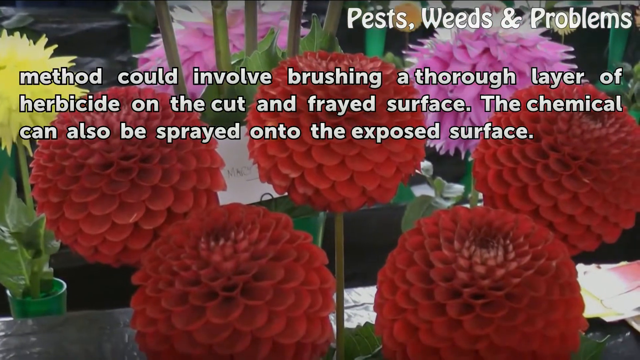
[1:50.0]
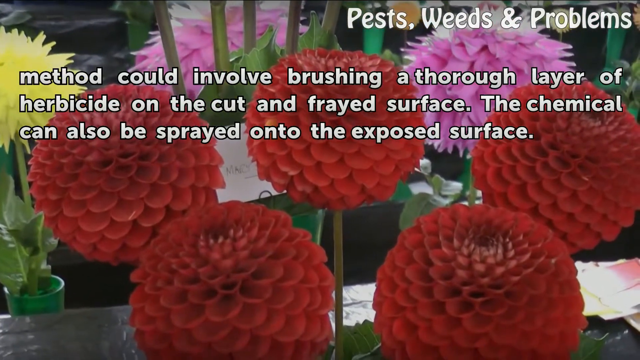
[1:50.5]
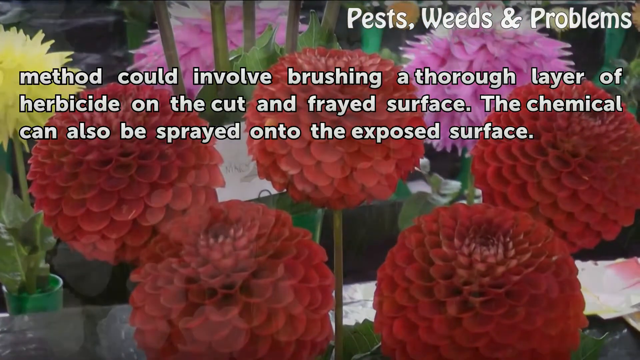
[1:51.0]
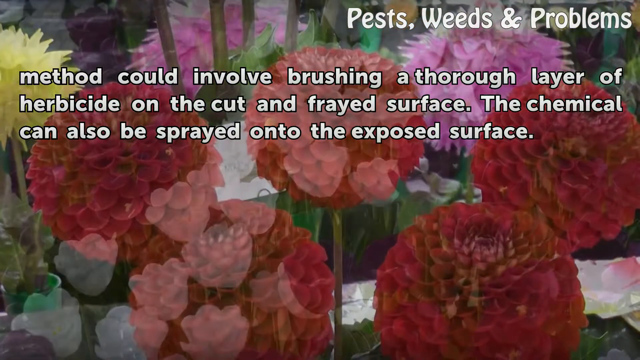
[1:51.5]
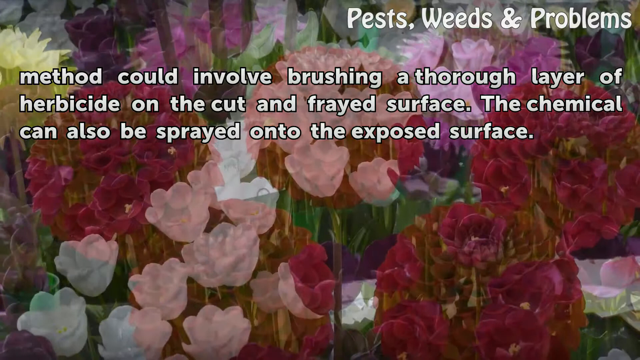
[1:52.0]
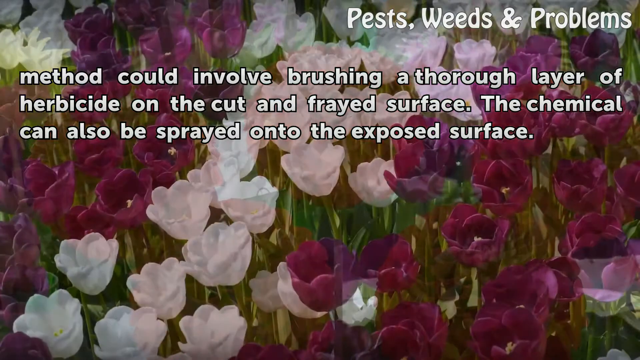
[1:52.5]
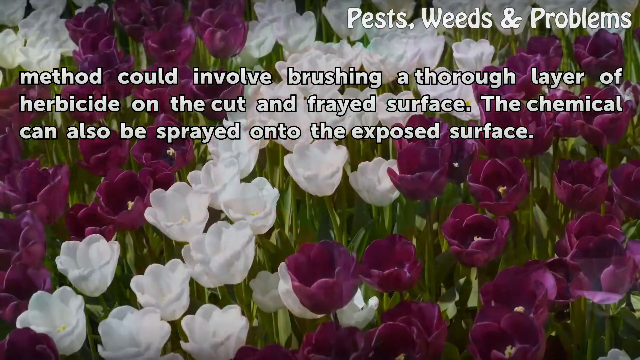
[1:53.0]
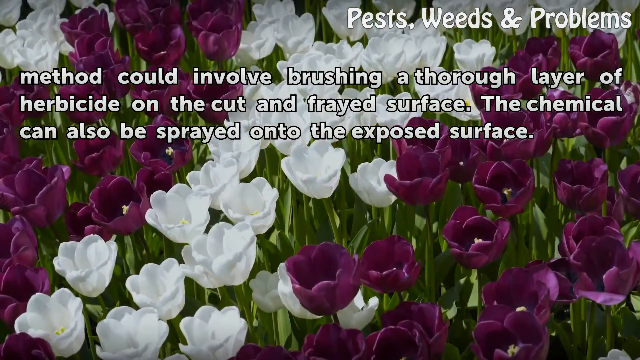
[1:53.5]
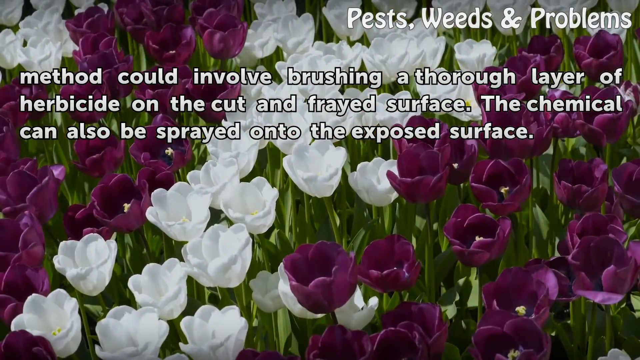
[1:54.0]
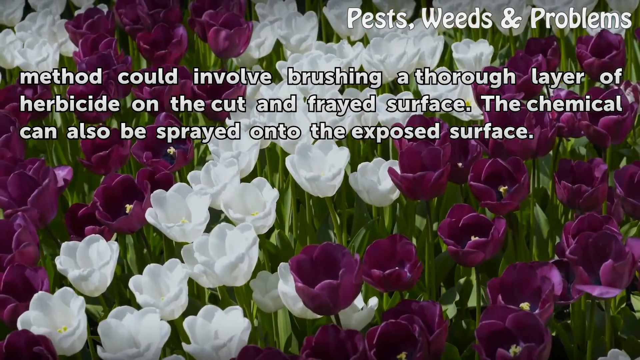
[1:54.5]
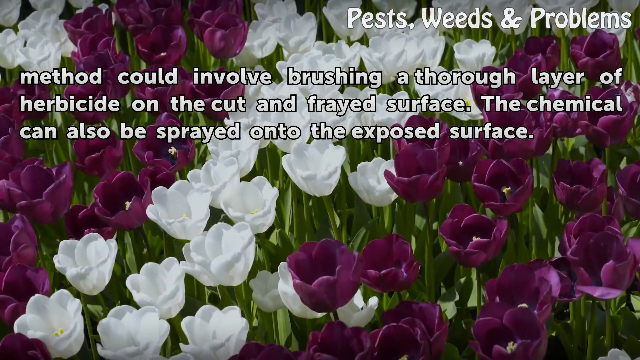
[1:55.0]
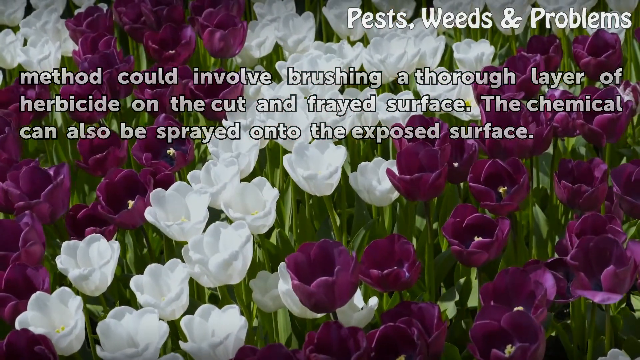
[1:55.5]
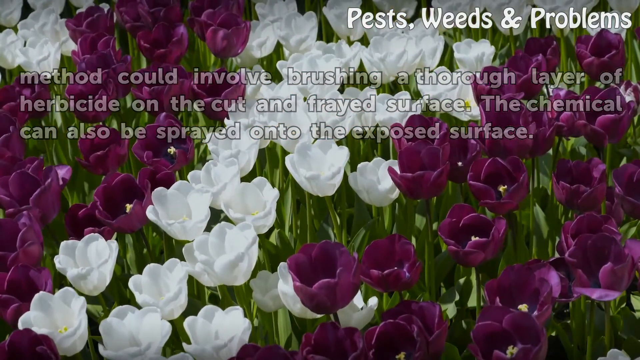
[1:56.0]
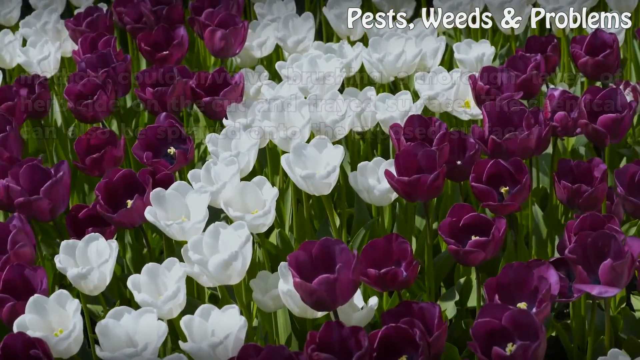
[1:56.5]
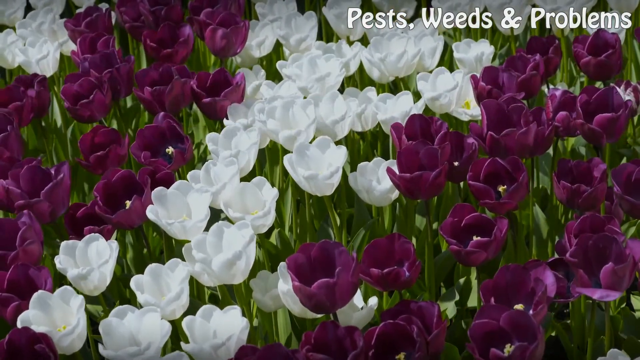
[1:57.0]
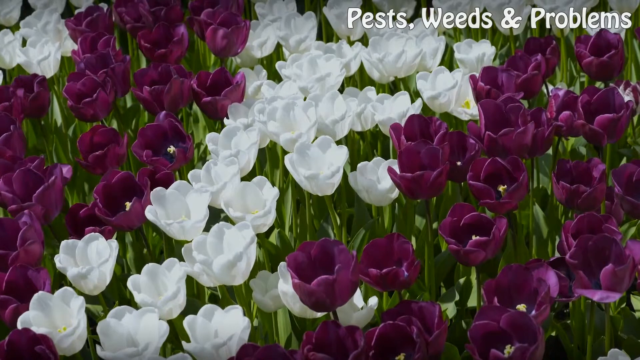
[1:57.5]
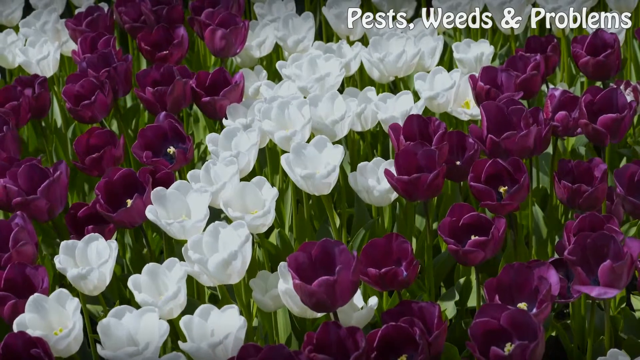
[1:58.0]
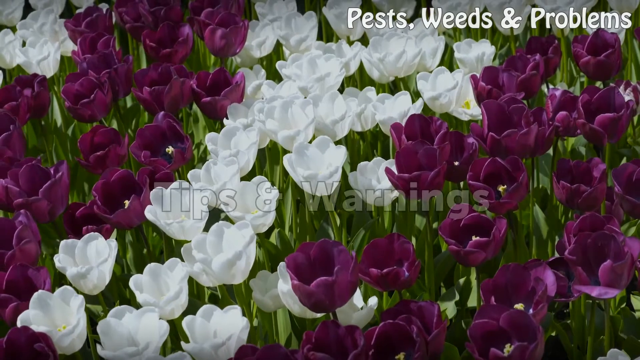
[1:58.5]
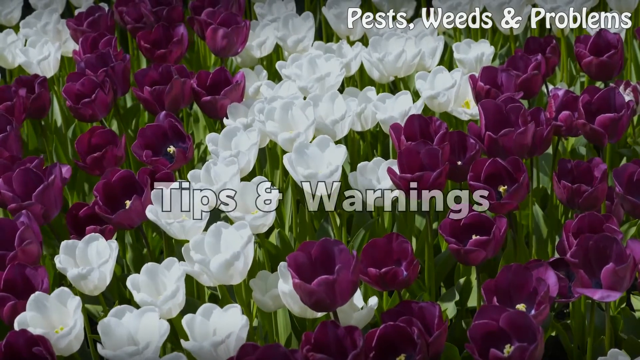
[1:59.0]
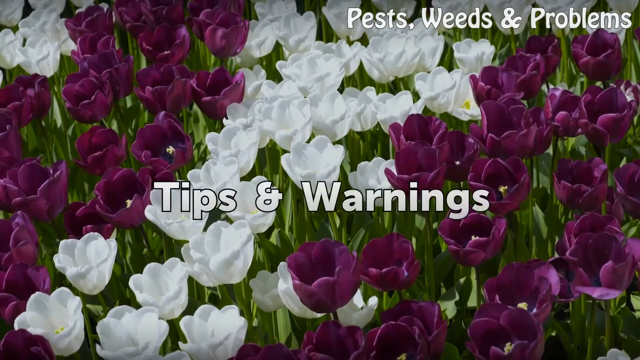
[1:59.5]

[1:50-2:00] The title "pests, weeds & problems" is still in the upper right-hand corner. Text reads "method could involve brushing a double layer of herbicide on the cut and frayed surface. The chemical can also be sprayed onto the exposed surface." The background flowers change to purple and white flowers. The words disappear, and the next section is titled "tips & warnings".